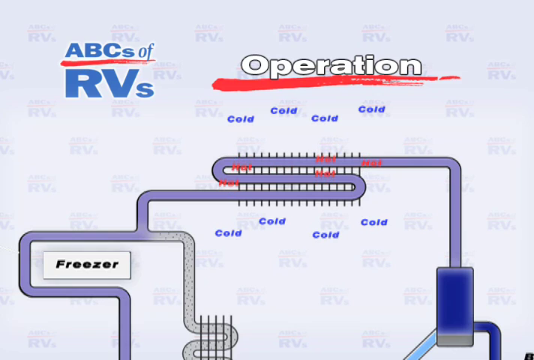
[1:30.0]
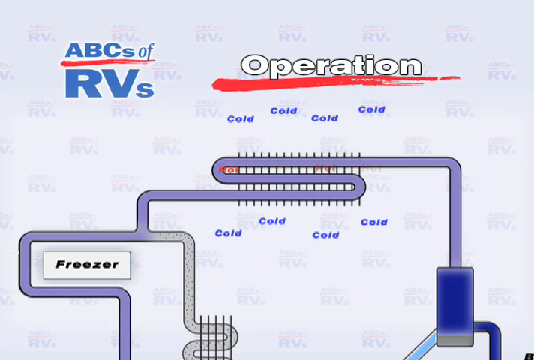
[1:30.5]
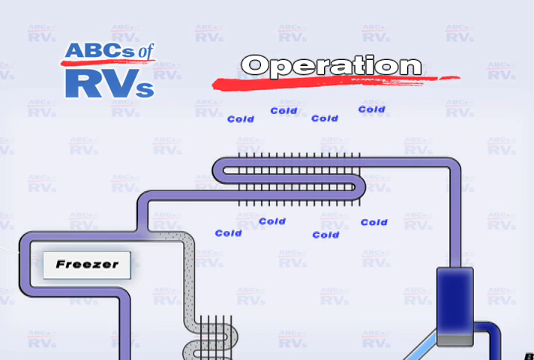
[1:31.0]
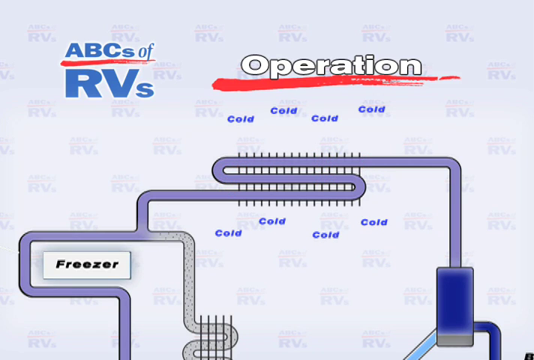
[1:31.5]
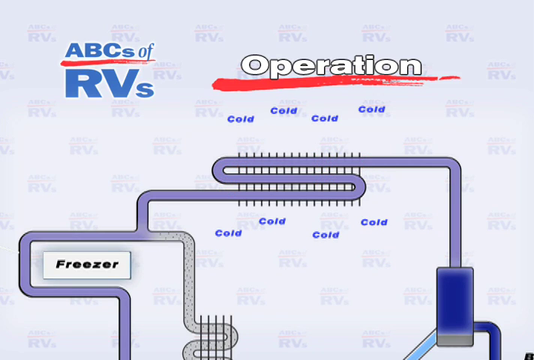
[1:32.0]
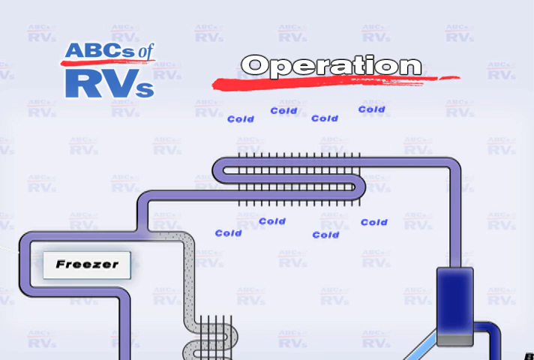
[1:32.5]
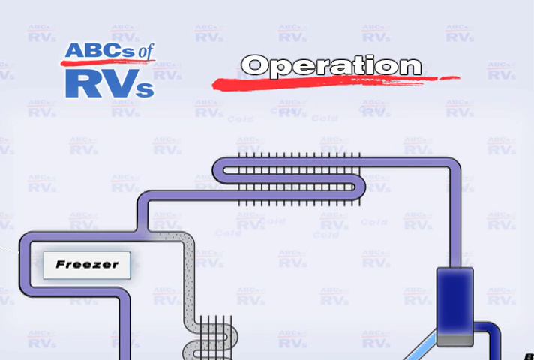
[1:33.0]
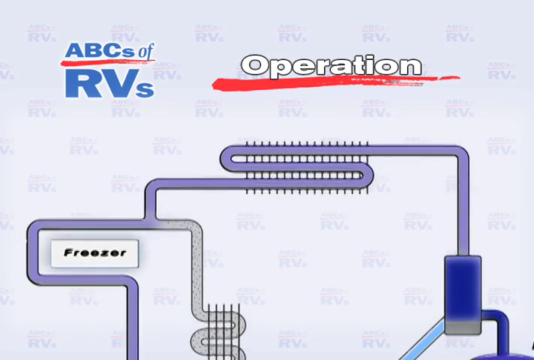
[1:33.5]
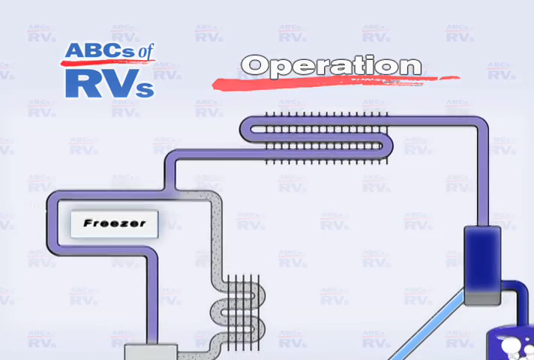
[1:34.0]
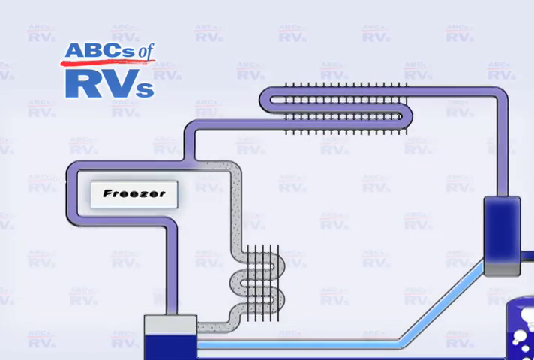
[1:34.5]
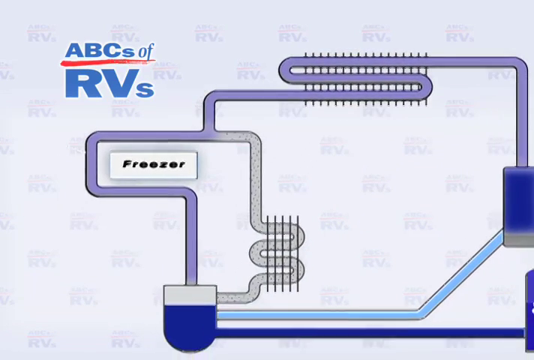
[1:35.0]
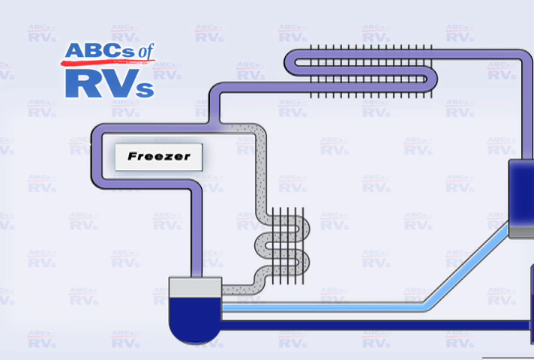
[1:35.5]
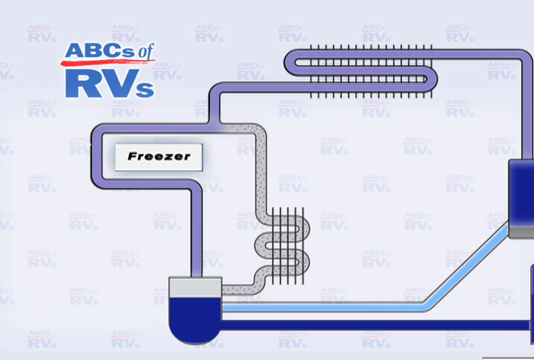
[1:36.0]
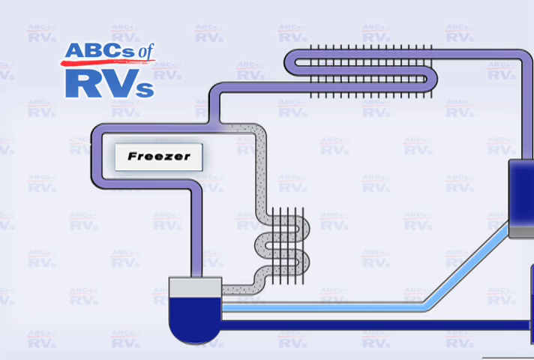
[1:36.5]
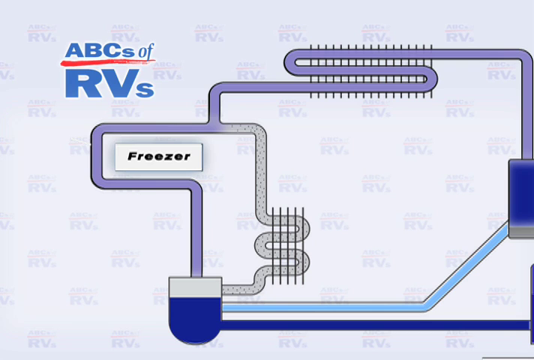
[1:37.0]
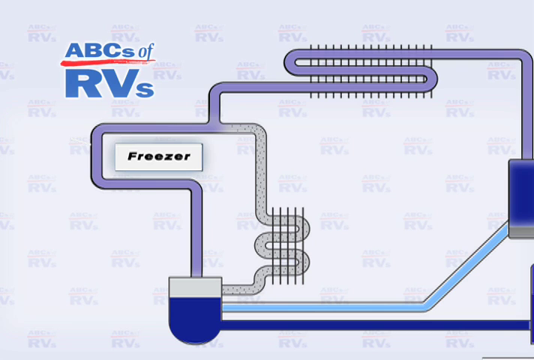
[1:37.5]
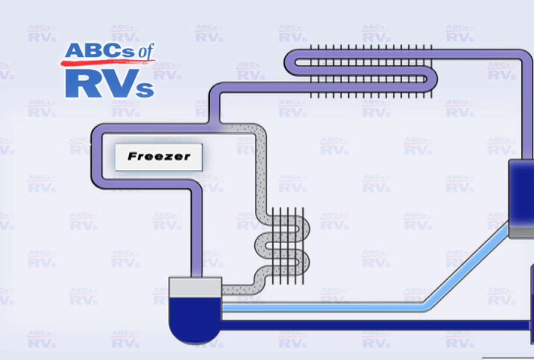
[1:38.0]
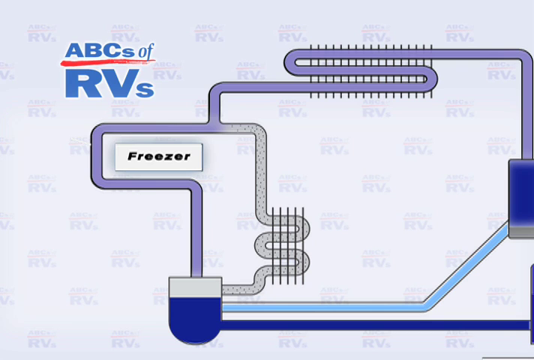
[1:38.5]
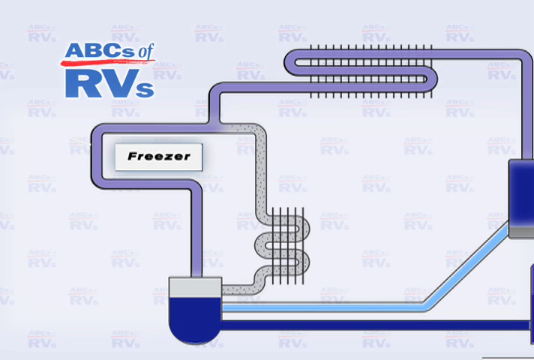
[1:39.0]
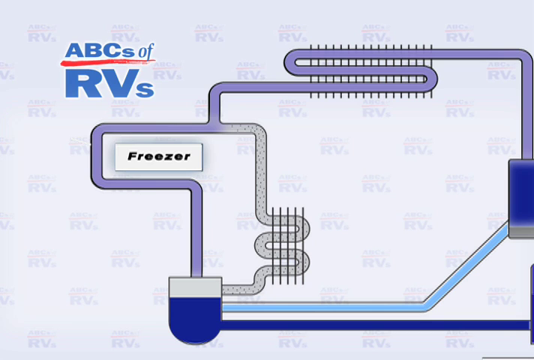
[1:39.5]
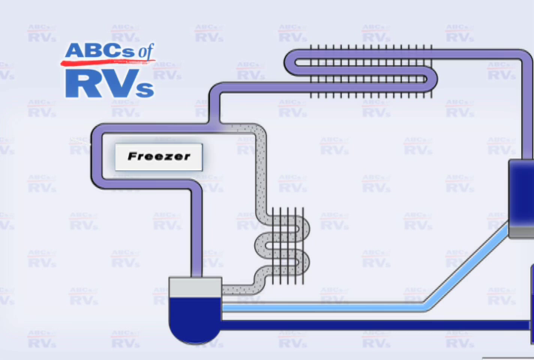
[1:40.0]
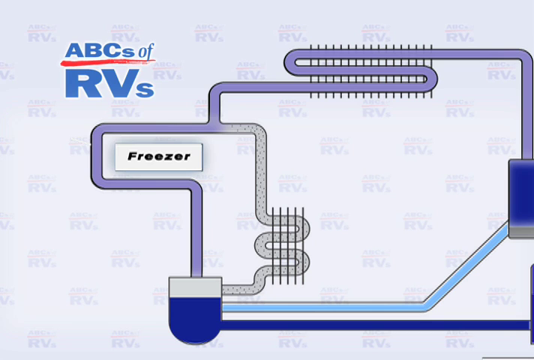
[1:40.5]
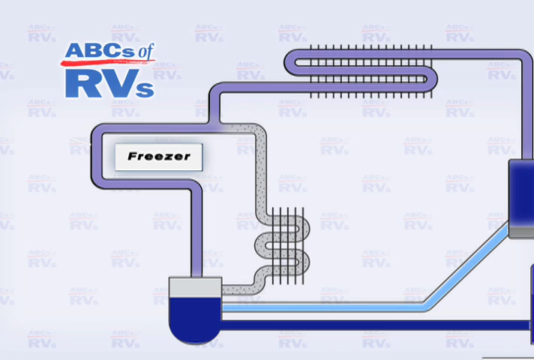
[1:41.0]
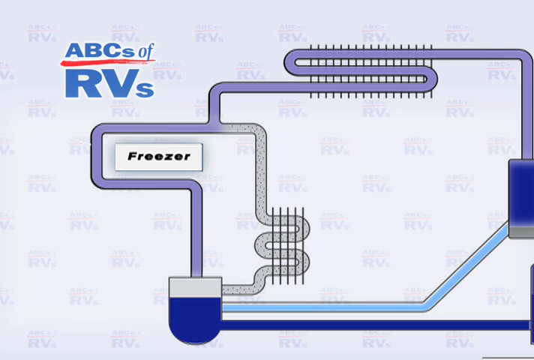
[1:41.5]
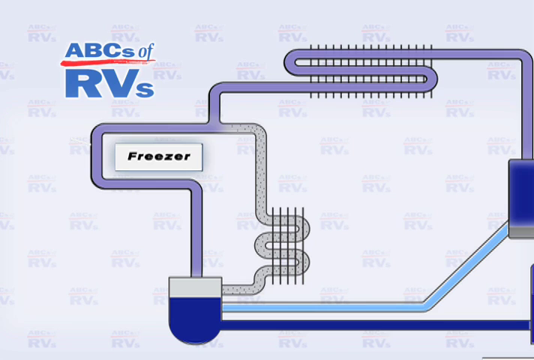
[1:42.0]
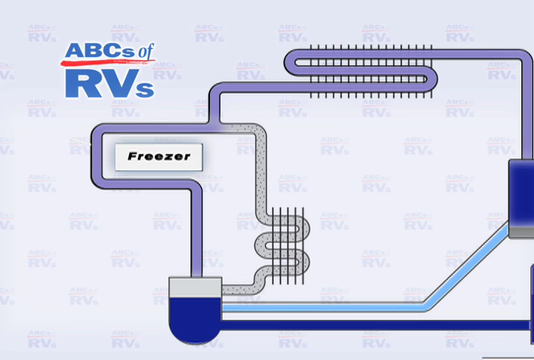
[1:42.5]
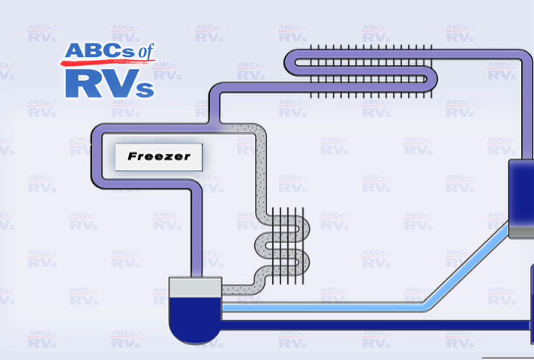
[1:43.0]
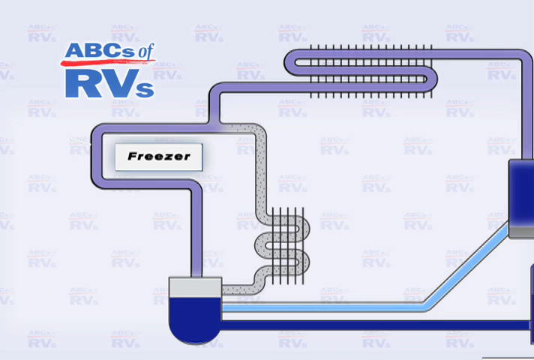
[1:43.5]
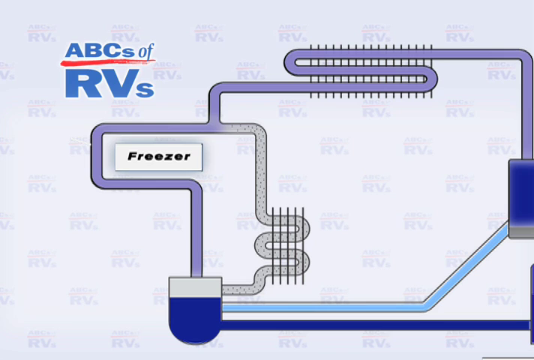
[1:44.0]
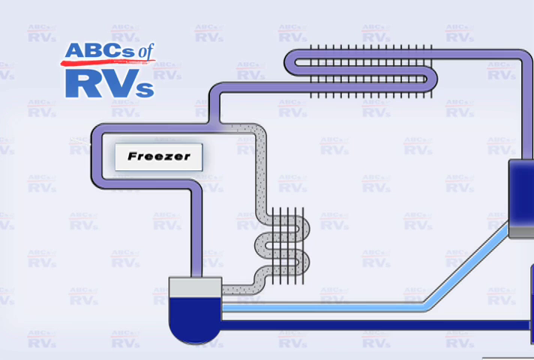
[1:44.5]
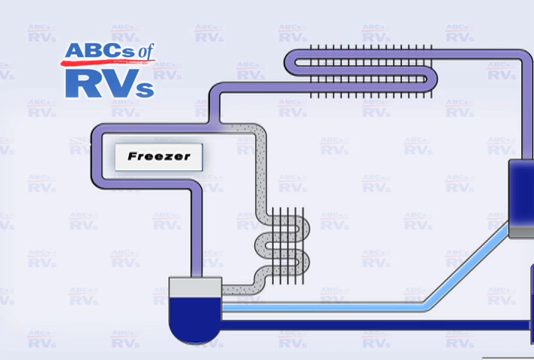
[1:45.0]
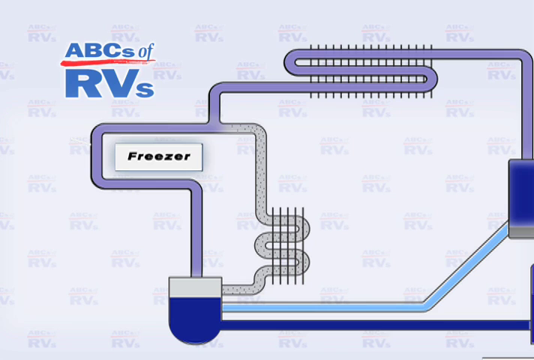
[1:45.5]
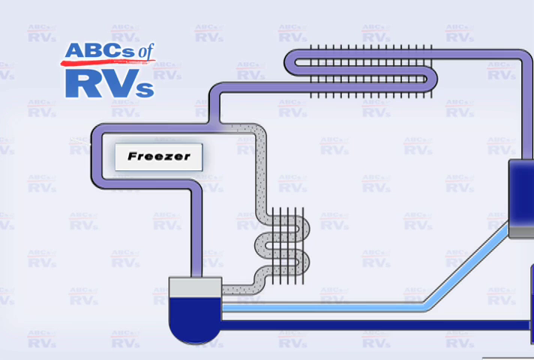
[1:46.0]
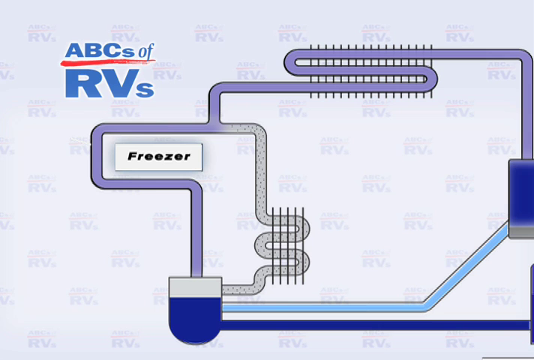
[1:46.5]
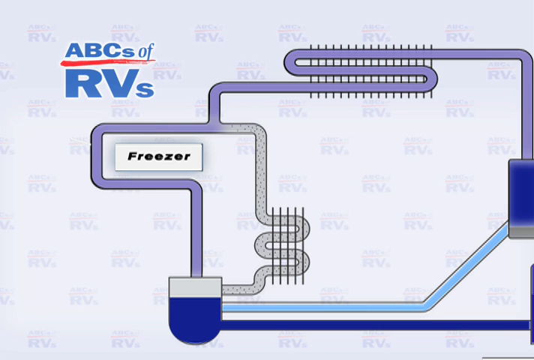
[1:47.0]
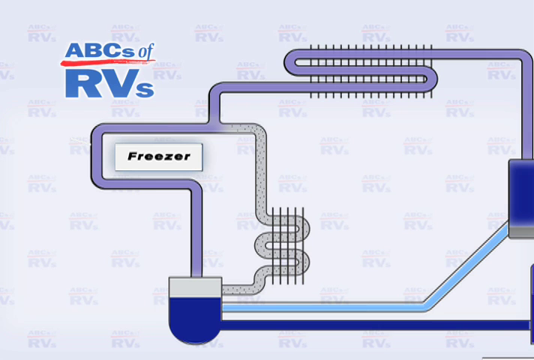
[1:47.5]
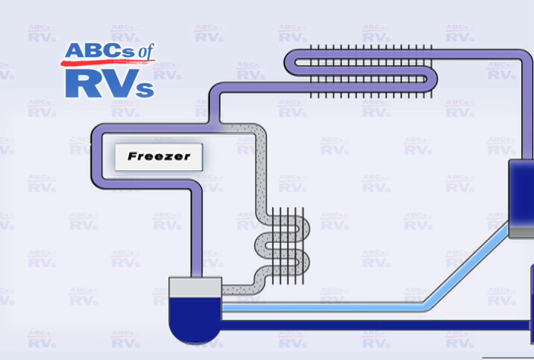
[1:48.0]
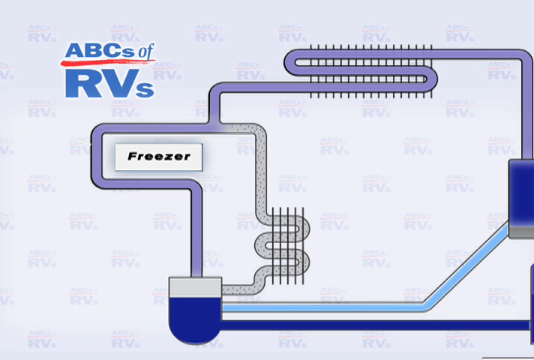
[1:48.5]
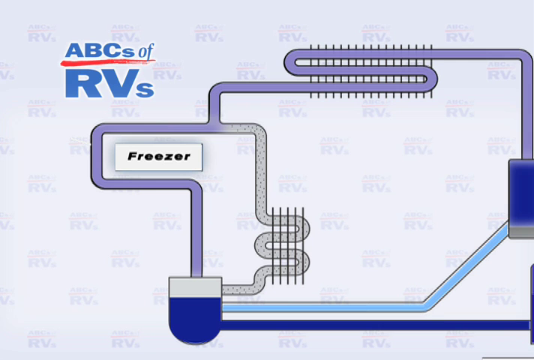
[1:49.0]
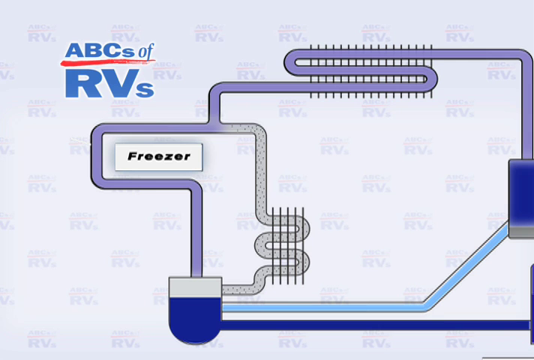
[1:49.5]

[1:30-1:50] The demonstration of the ABCs of RVs continues, showing how the red RVs and the blue RVs combine in one setting.